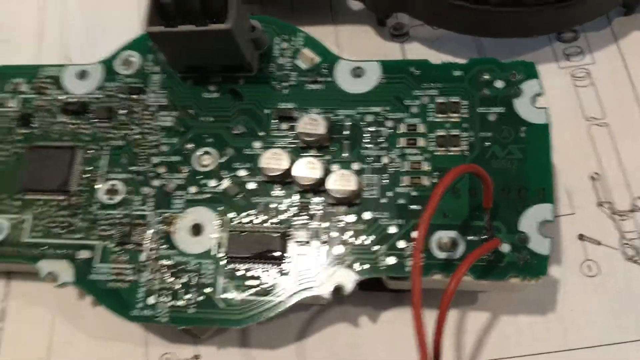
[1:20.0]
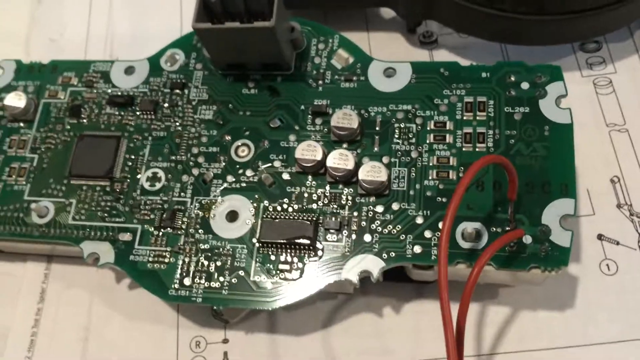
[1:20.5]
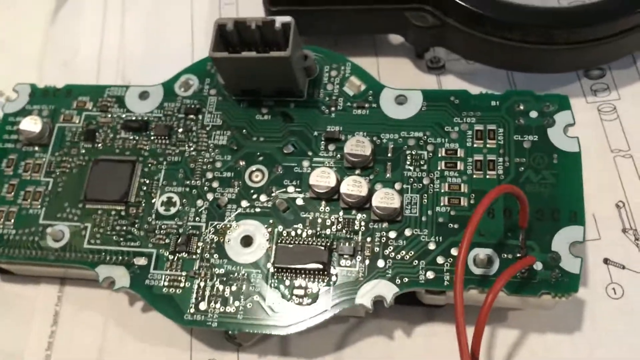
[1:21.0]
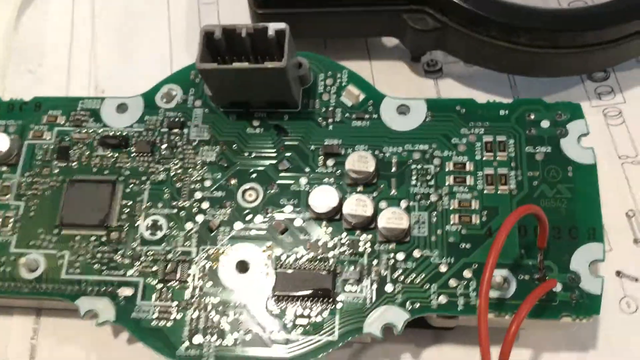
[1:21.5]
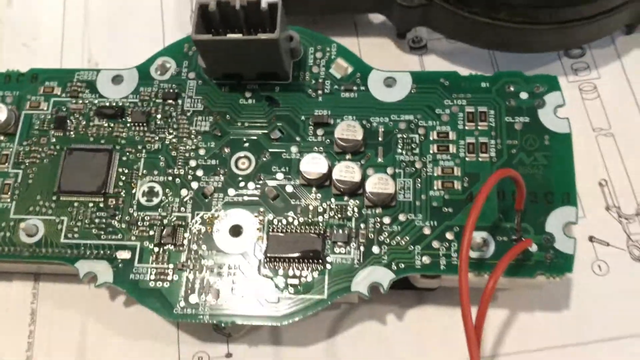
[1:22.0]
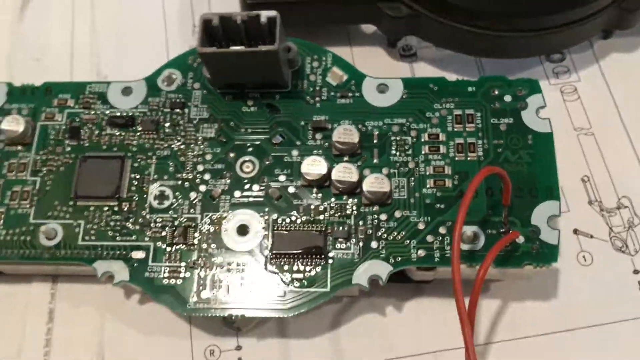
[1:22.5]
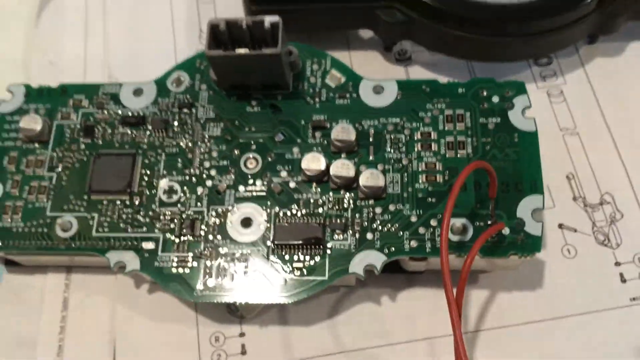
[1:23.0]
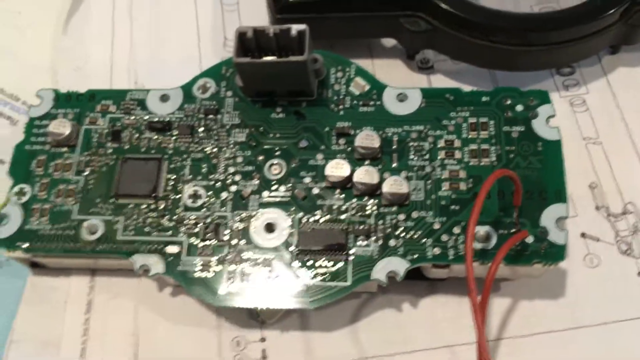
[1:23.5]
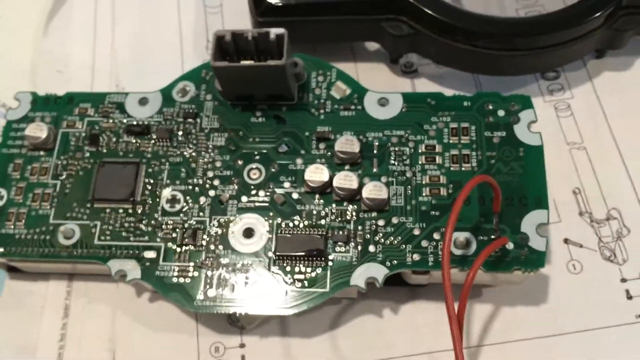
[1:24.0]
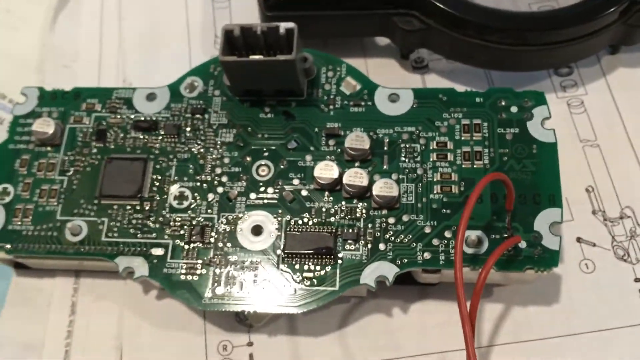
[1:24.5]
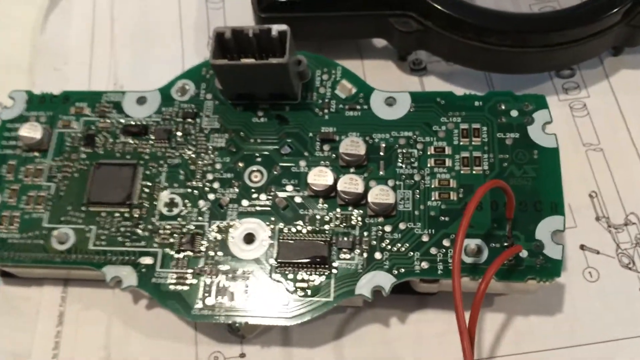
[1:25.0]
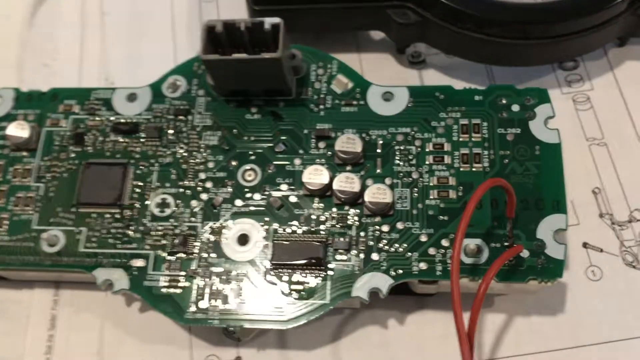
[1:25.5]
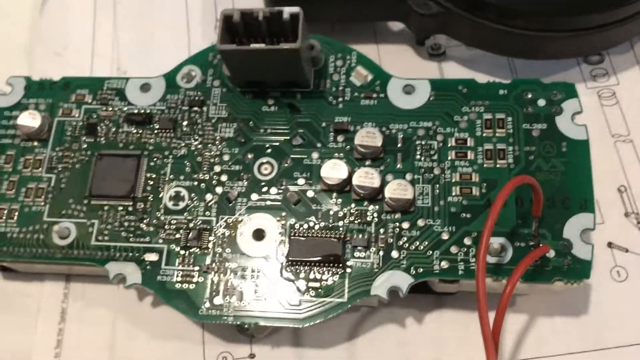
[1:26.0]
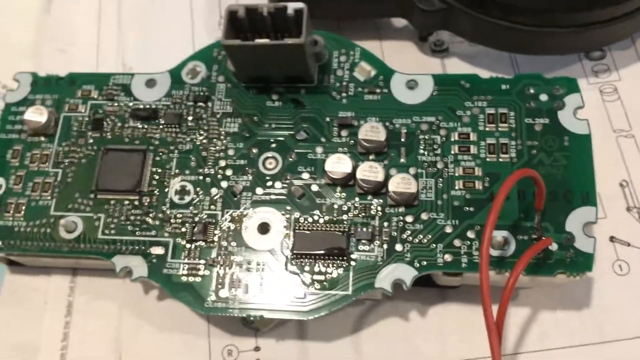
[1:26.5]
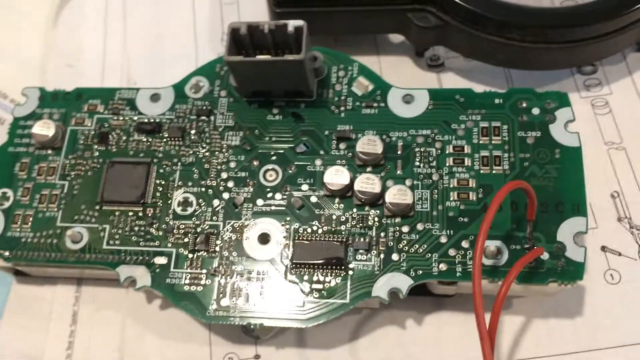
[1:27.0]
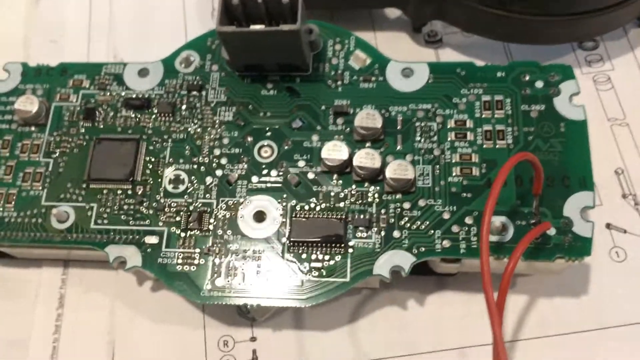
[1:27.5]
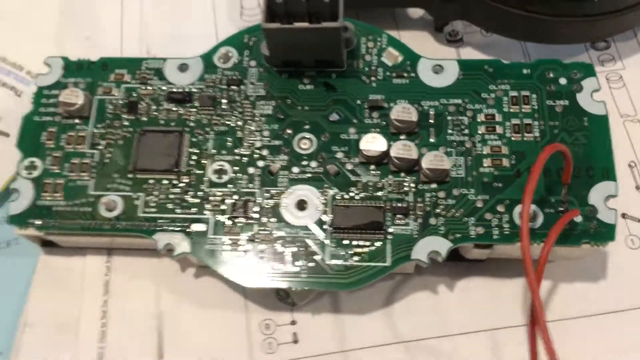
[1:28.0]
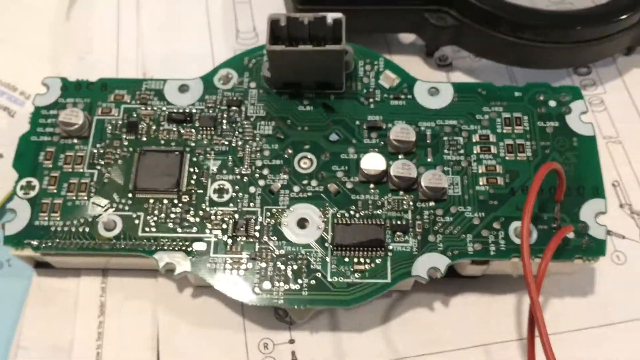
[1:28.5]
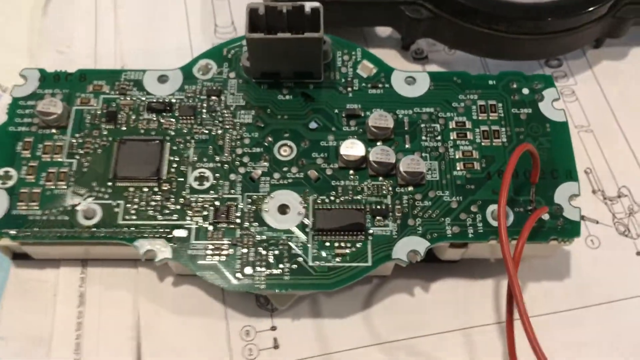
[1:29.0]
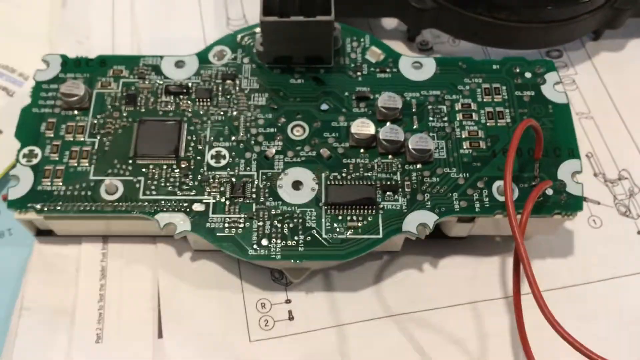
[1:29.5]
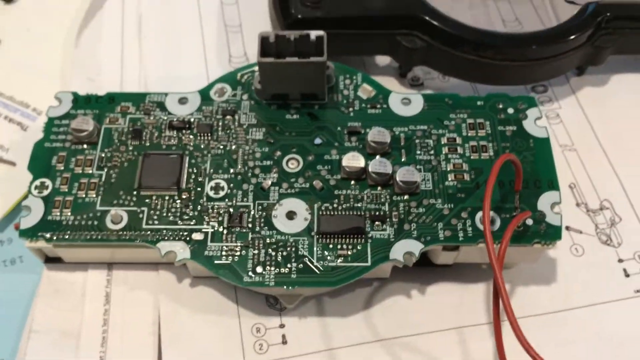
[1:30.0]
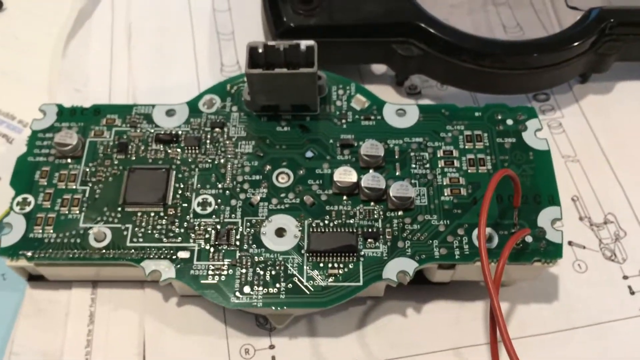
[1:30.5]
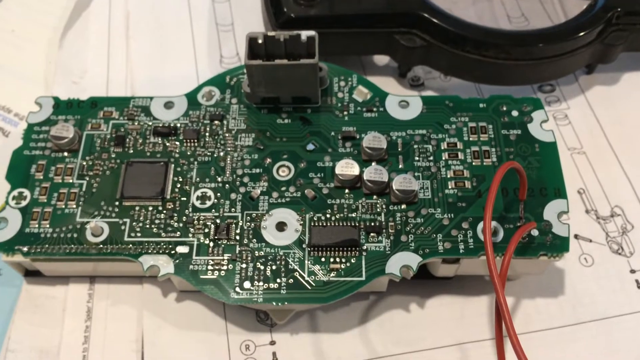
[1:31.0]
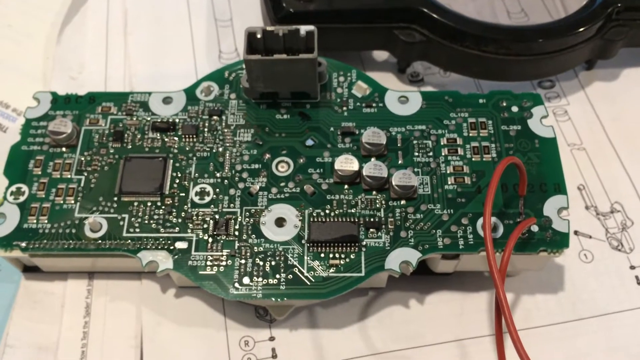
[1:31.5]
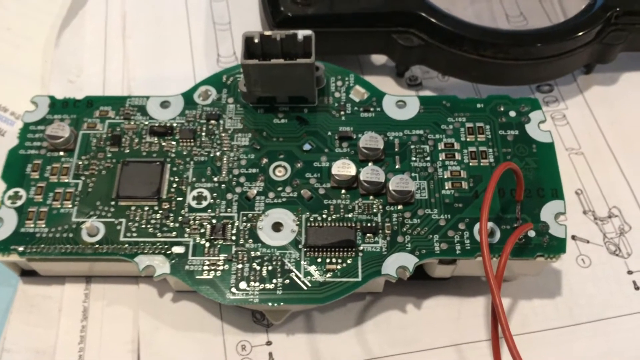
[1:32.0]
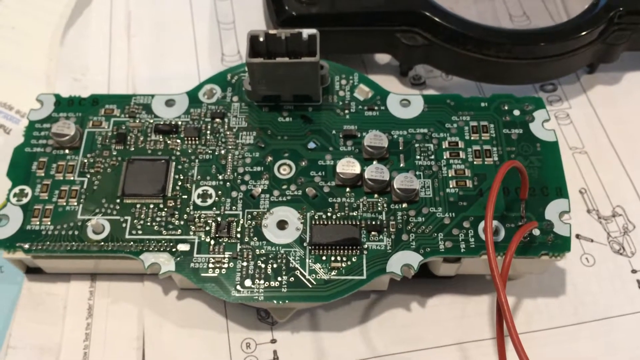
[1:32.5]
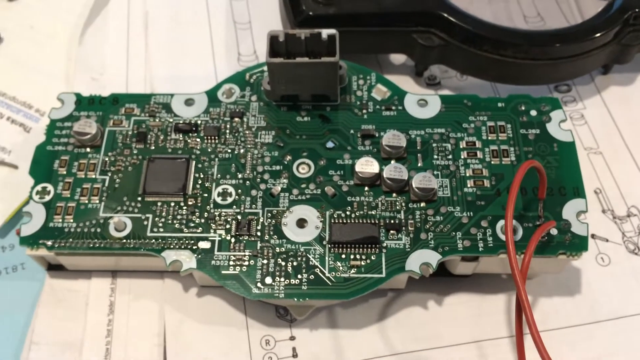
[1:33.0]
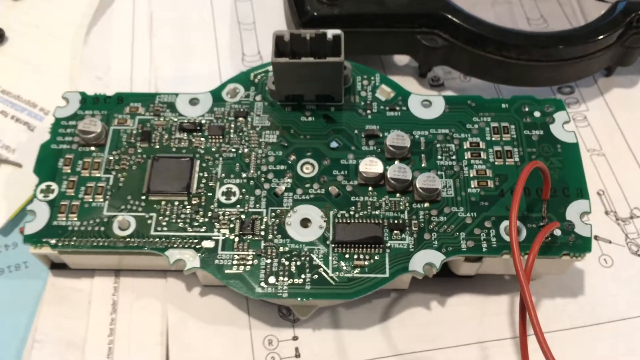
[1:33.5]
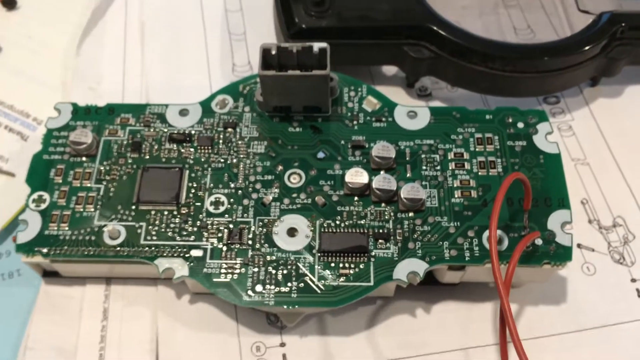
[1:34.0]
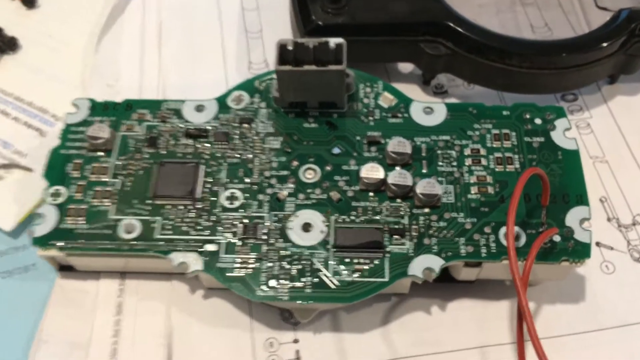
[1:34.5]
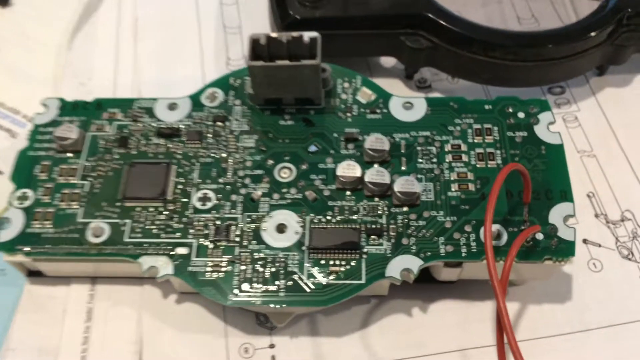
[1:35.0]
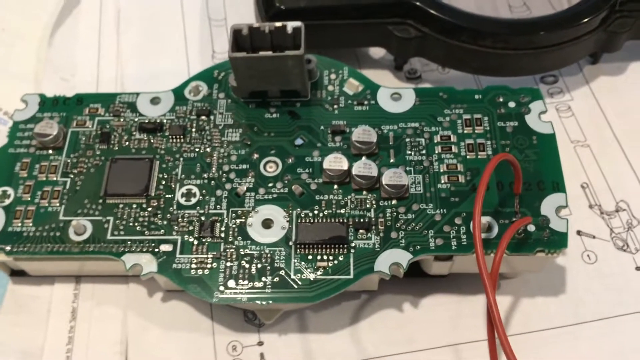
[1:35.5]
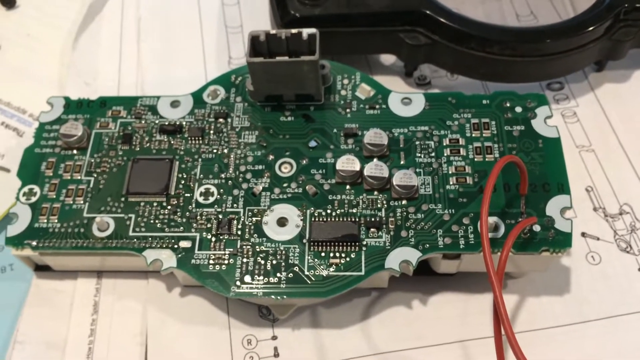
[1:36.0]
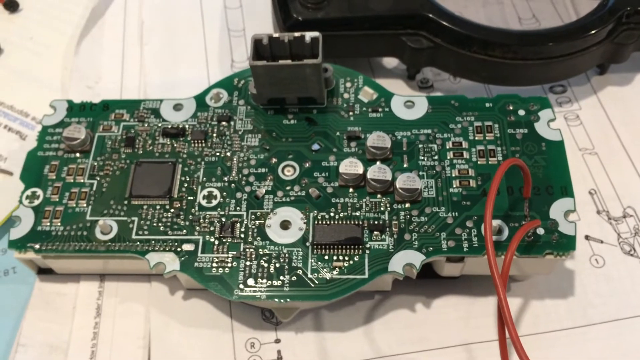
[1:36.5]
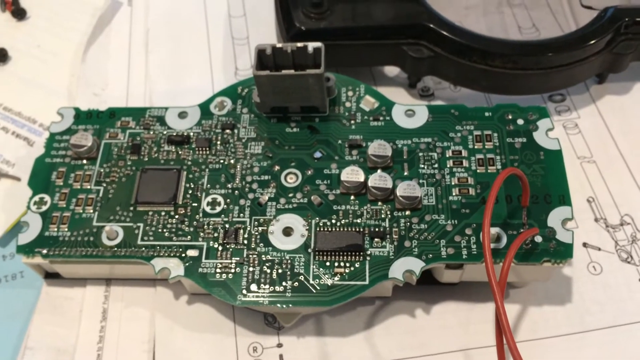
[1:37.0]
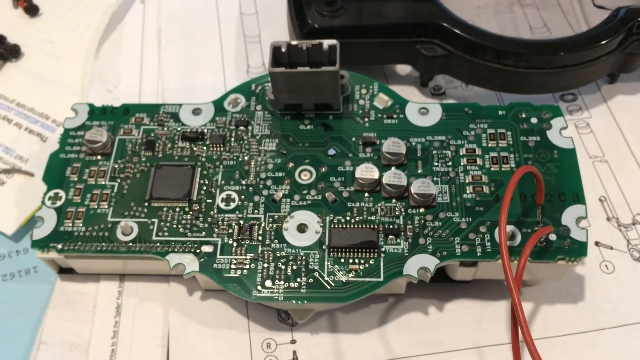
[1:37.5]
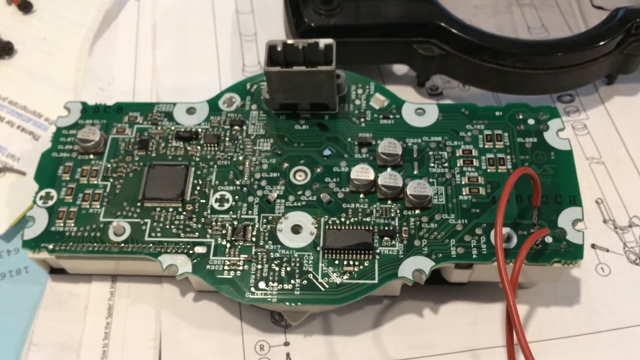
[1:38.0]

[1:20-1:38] The man seems to be talking to the camera. The back of the device is shown, with the green board, soldering, chipsets and capacitors, and black and metallic gray and silver components. The frame is also visible in the background. He is no longer touching the device, the wiring or the shell. The main subject appears to be the creator or a worker fixing the device, though what he looks like is not seen. There is still one device and one individual.